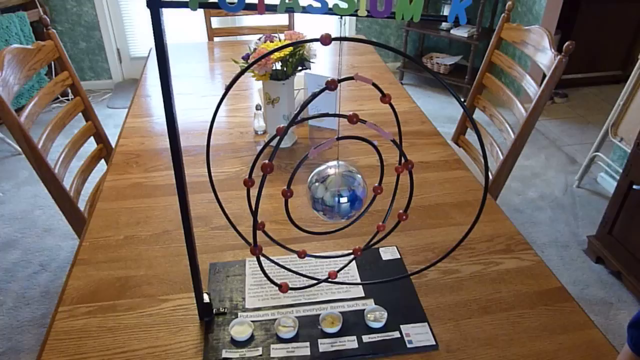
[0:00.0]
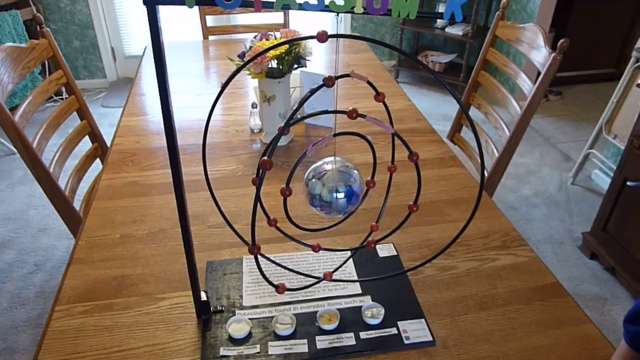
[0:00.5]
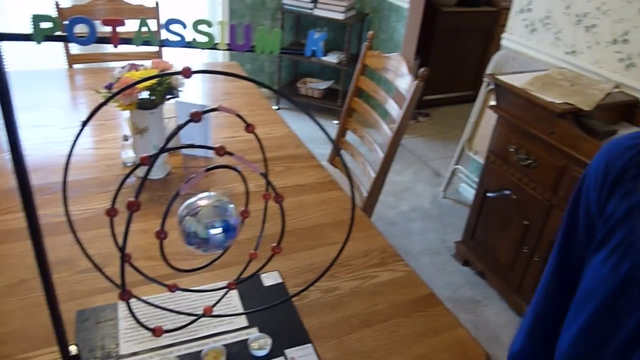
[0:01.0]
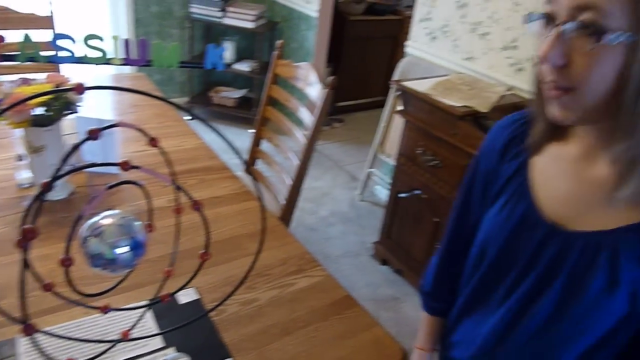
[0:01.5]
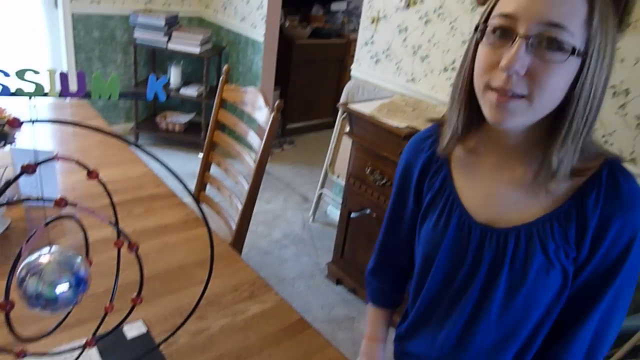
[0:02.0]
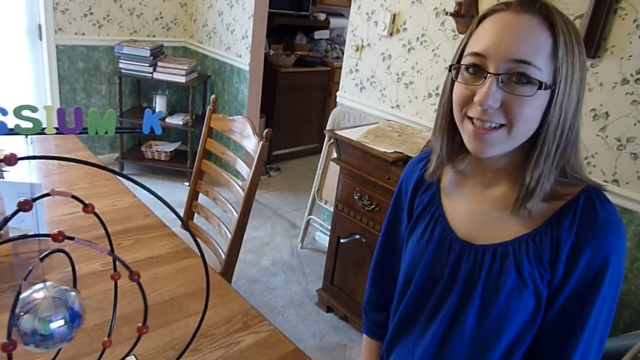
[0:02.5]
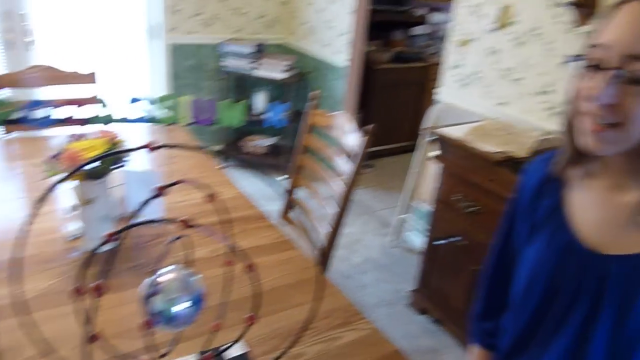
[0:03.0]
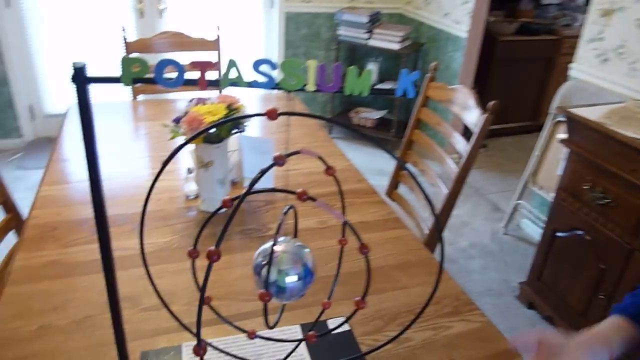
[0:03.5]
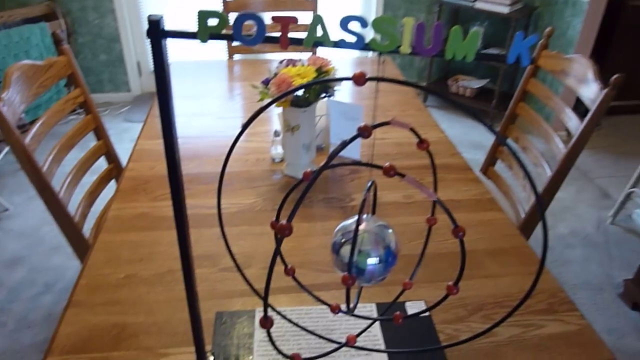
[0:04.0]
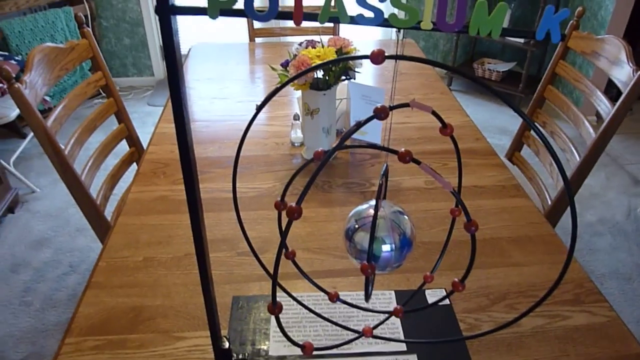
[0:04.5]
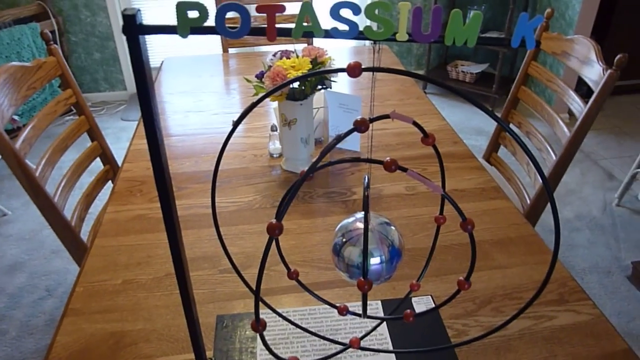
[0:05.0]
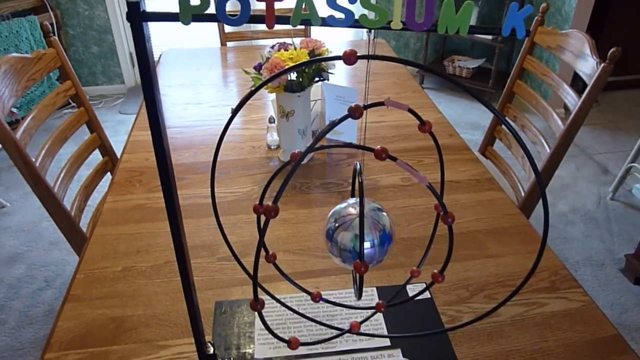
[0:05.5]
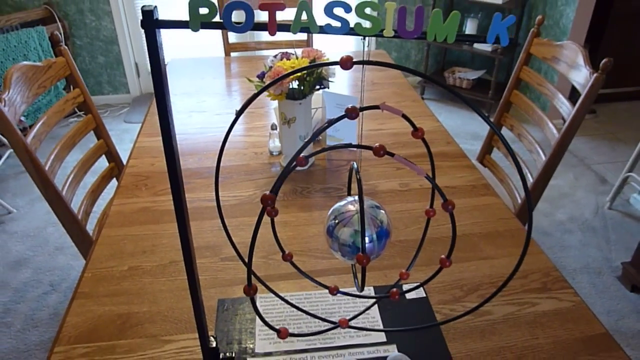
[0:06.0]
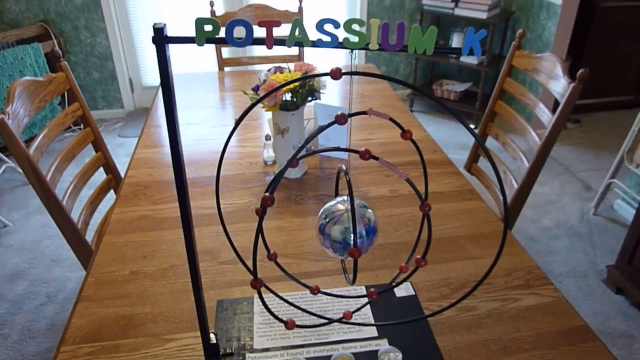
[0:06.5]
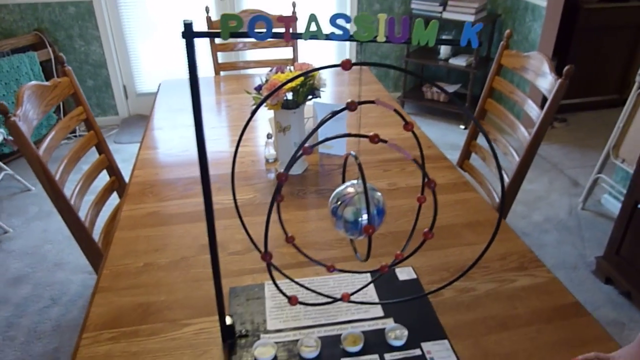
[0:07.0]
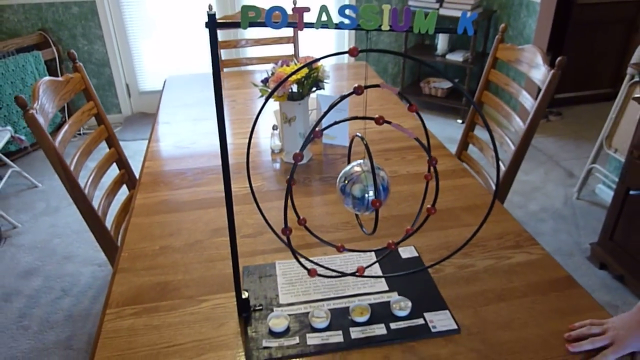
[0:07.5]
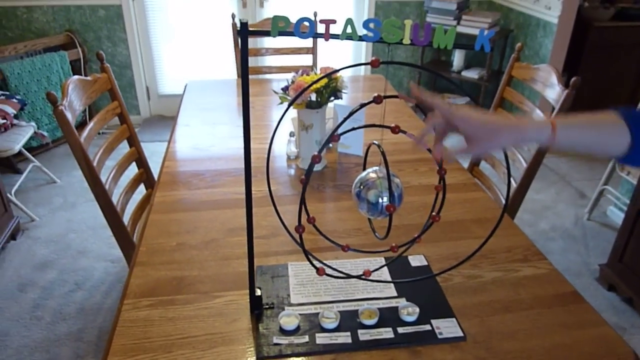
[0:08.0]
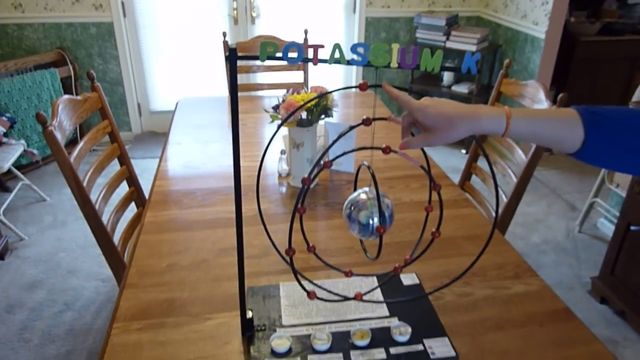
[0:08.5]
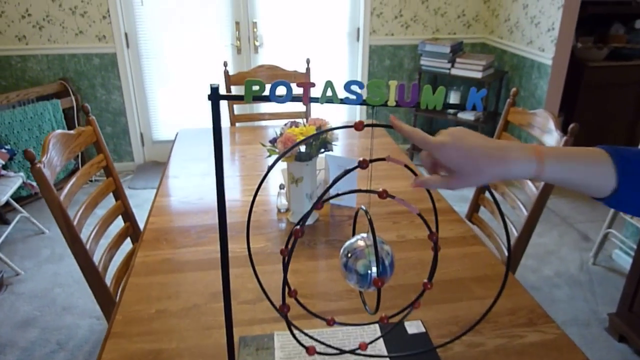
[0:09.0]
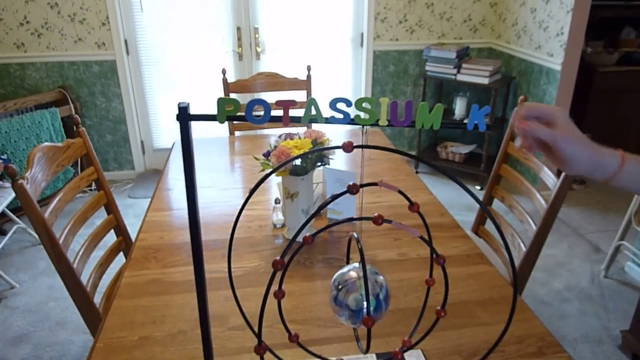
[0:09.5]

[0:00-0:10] A woman with glasses wears a dark blue, low-cut, U-shaped shirt. She appears to be filmed by a taller person, possibly her husband. She seems to be trying to teach something and points at the word "potassium" above a model that she apparently made. Several rings rotate around the model, with what looks like the earth in the middle, and everything slowly rotates around the earth. This seems to be the finished product, which she is apparently about to show how to make. The setting appears to be a dining room: there is a table with four chairs around it, the walls look very beige, and the floor is wooden.